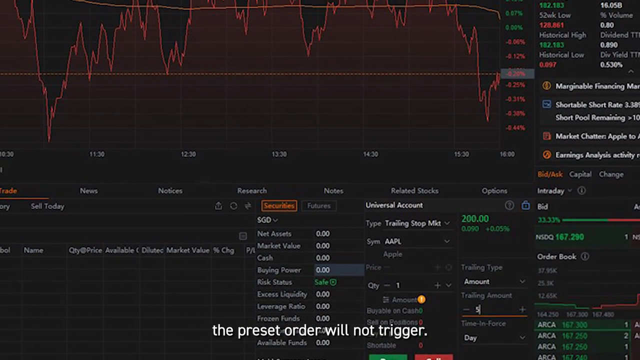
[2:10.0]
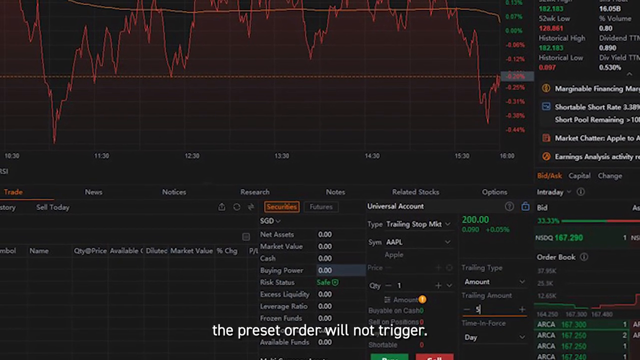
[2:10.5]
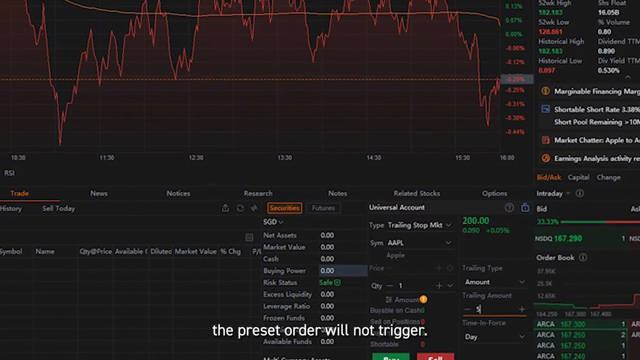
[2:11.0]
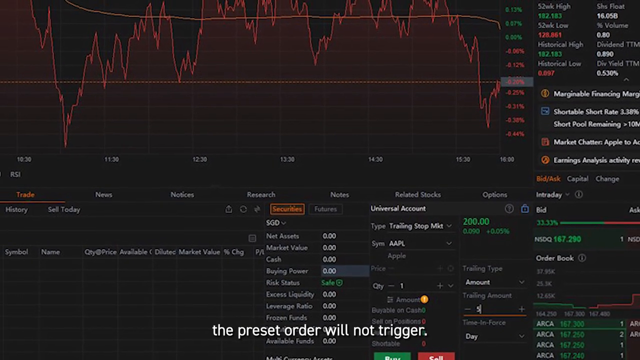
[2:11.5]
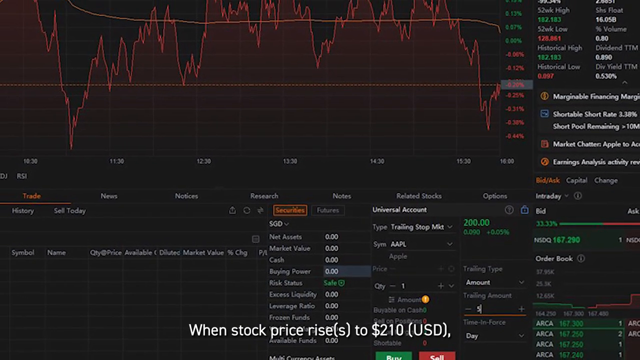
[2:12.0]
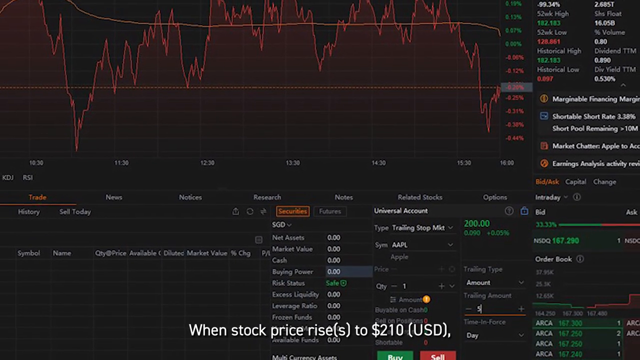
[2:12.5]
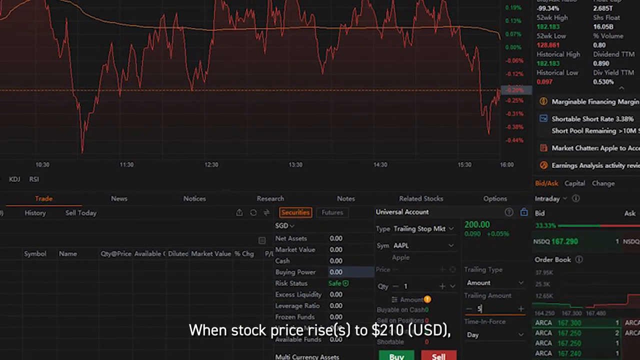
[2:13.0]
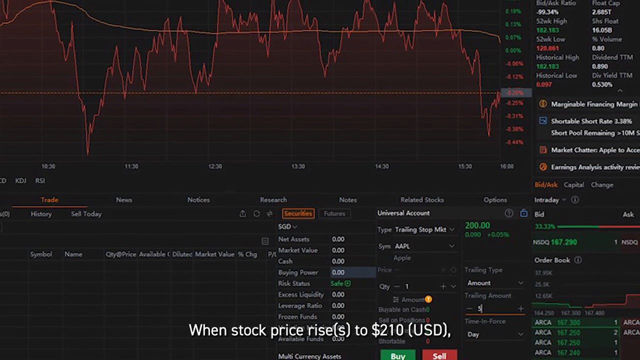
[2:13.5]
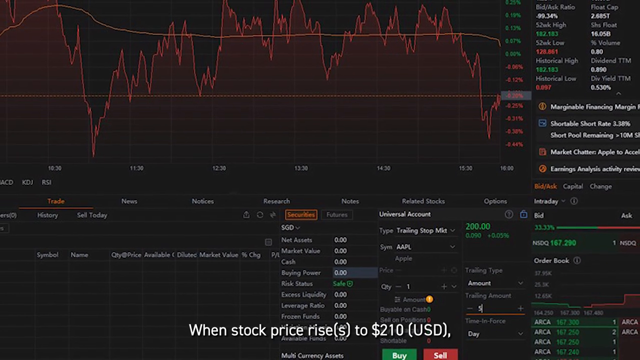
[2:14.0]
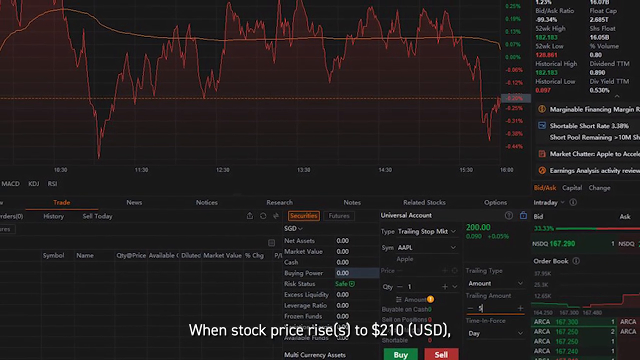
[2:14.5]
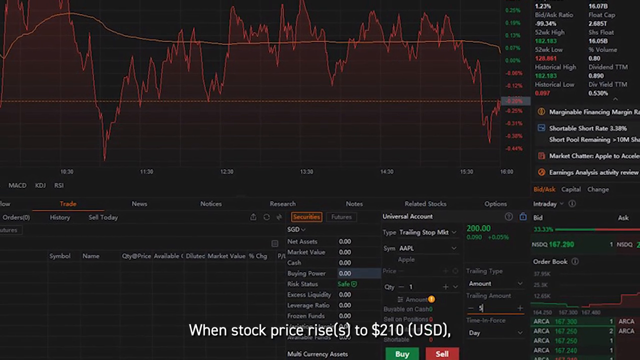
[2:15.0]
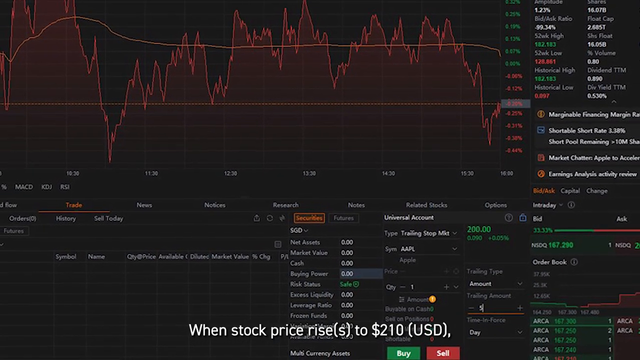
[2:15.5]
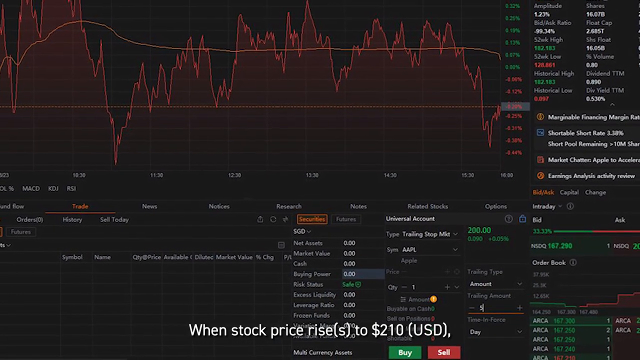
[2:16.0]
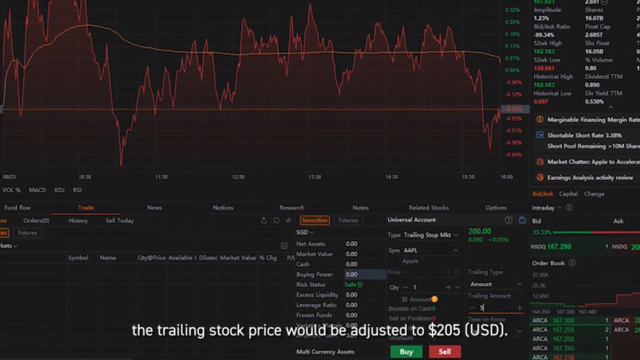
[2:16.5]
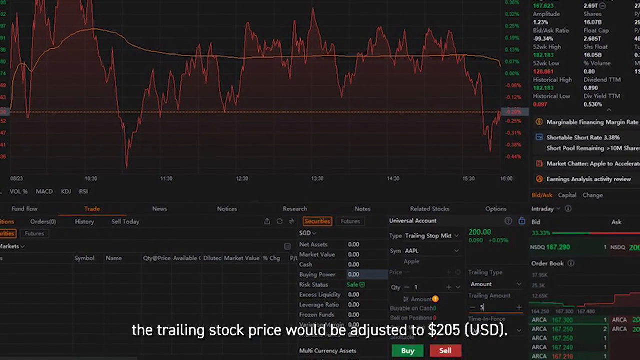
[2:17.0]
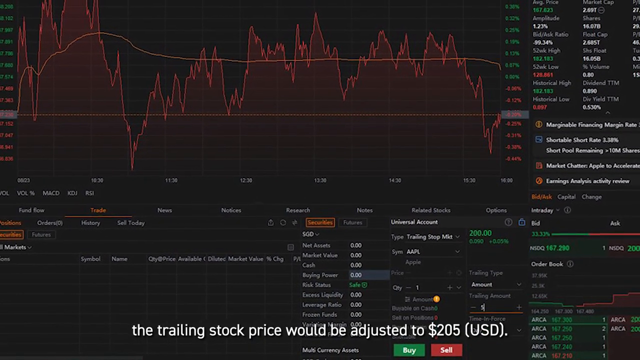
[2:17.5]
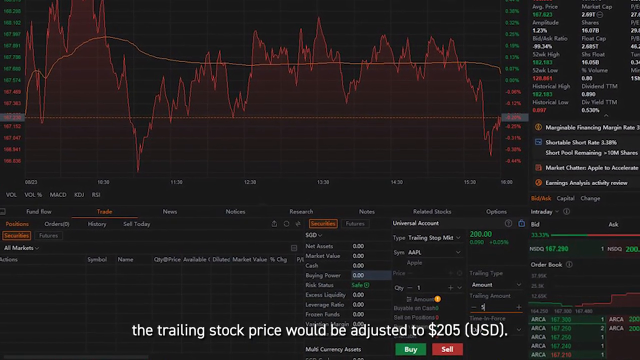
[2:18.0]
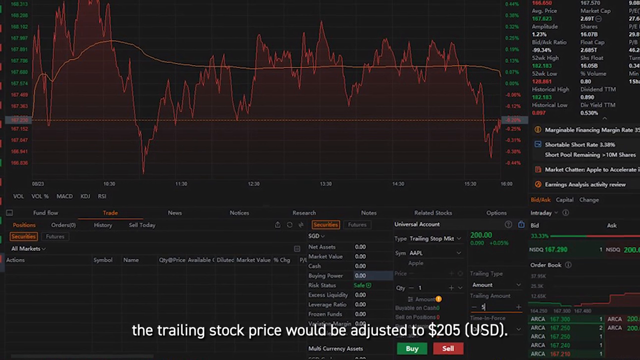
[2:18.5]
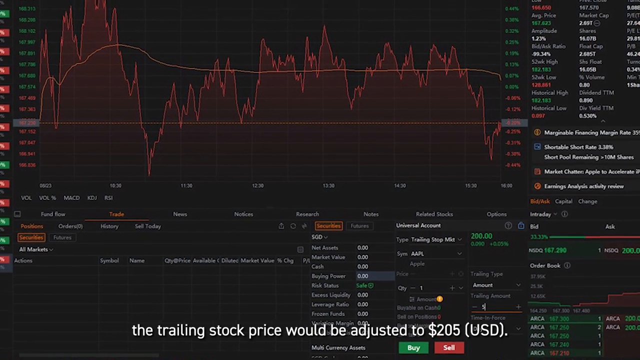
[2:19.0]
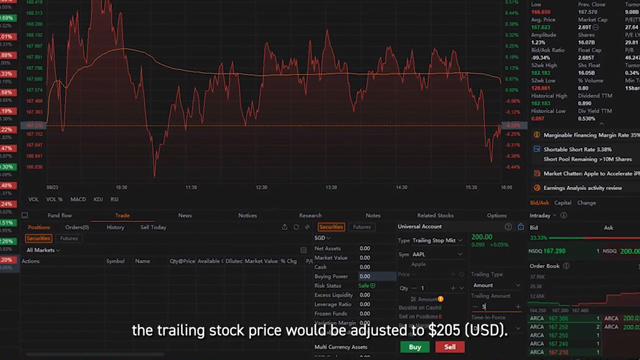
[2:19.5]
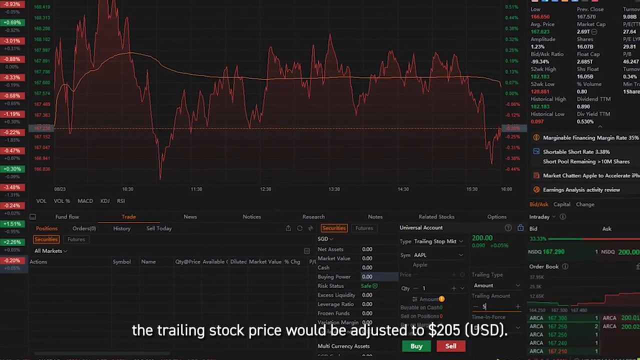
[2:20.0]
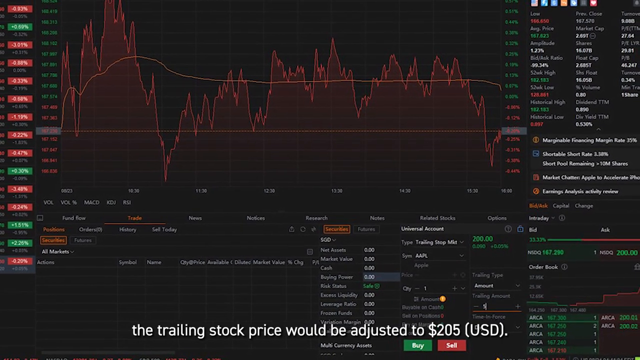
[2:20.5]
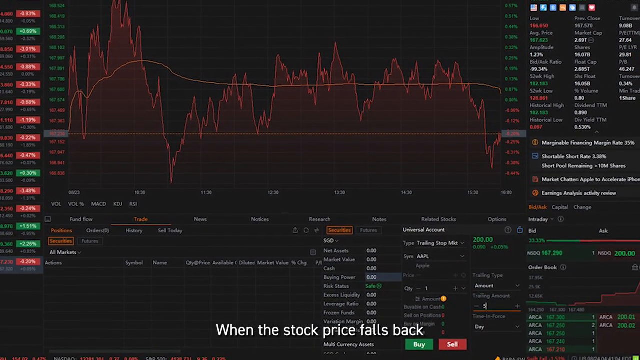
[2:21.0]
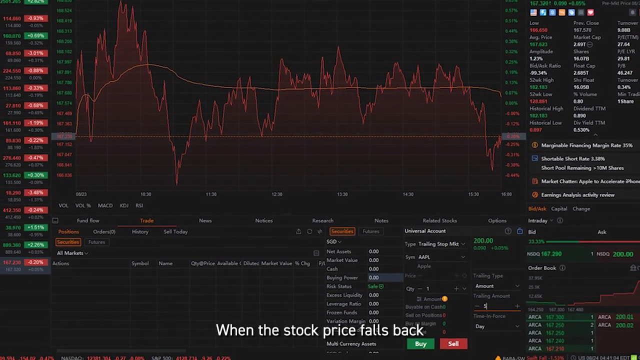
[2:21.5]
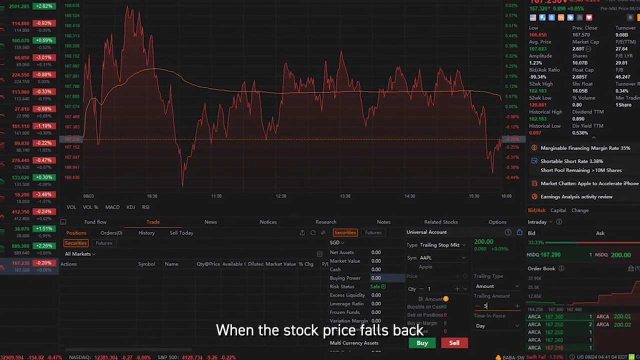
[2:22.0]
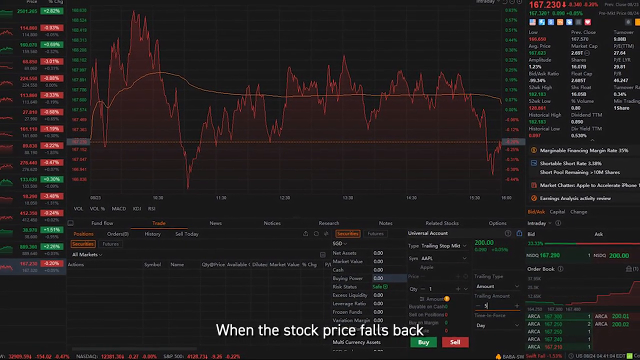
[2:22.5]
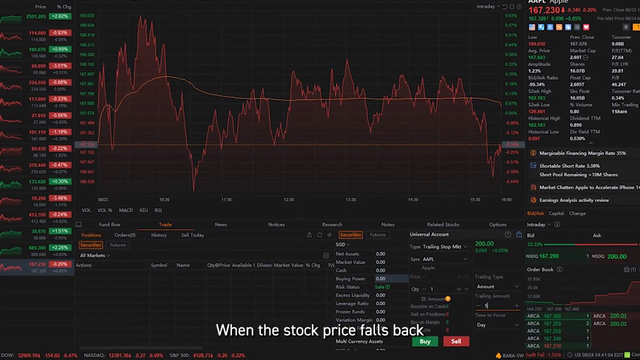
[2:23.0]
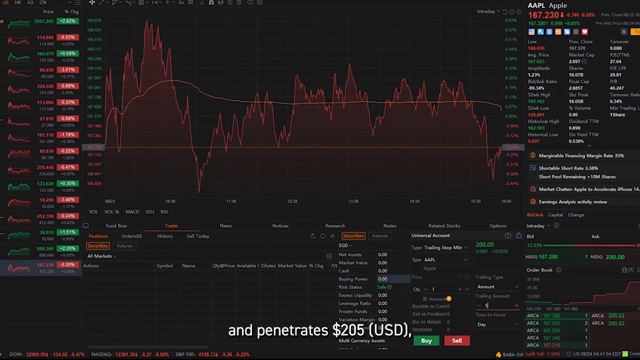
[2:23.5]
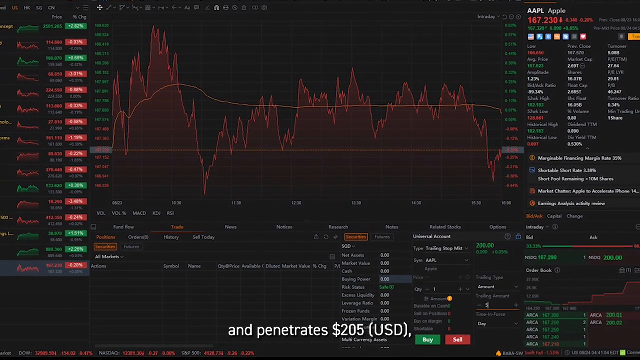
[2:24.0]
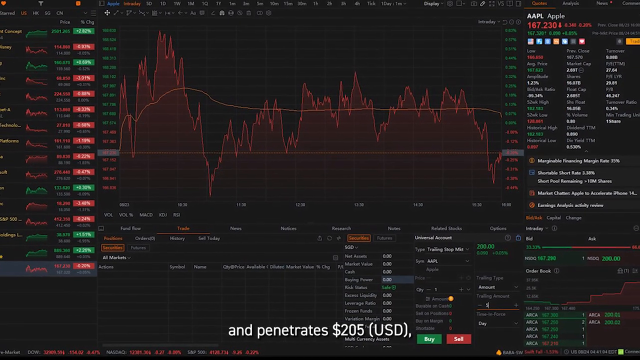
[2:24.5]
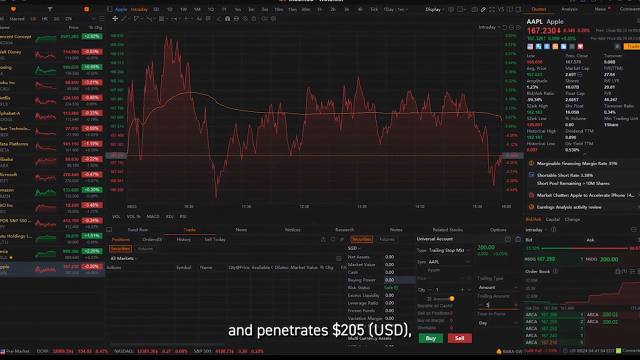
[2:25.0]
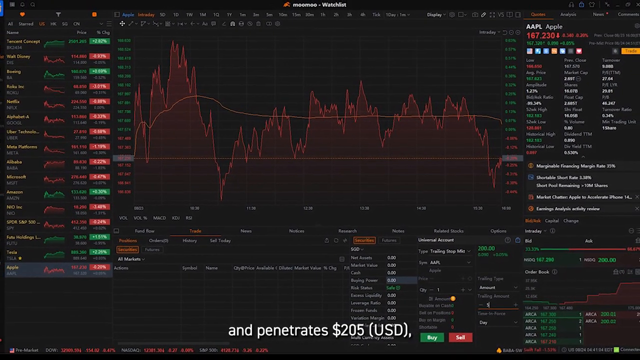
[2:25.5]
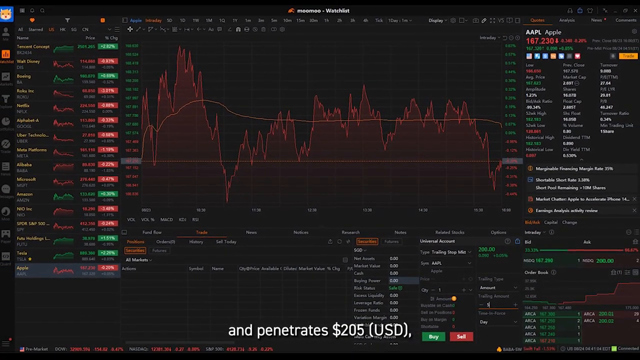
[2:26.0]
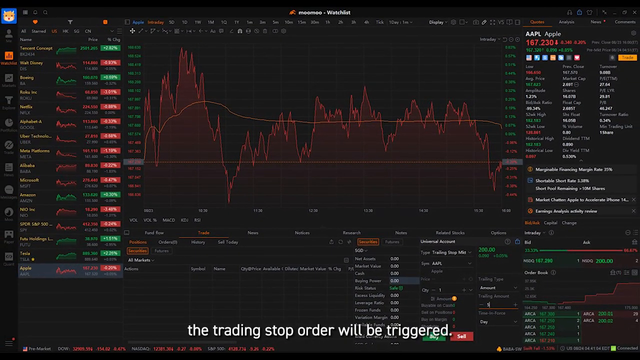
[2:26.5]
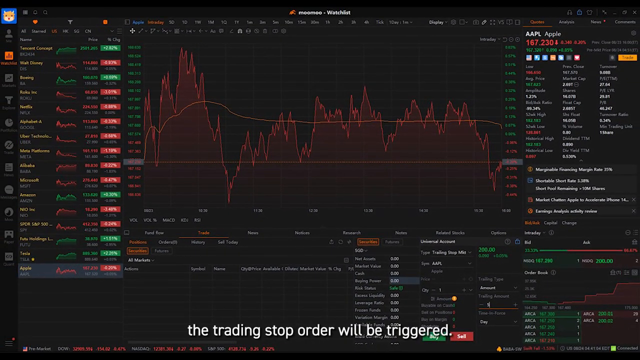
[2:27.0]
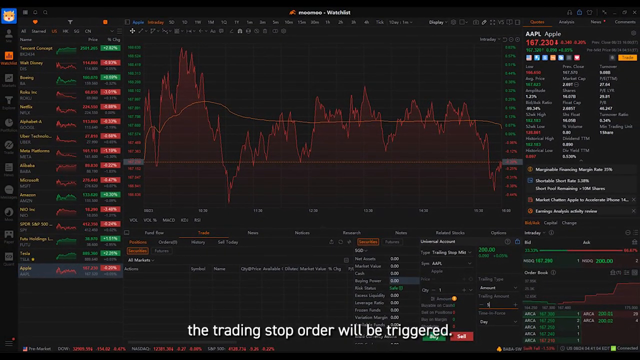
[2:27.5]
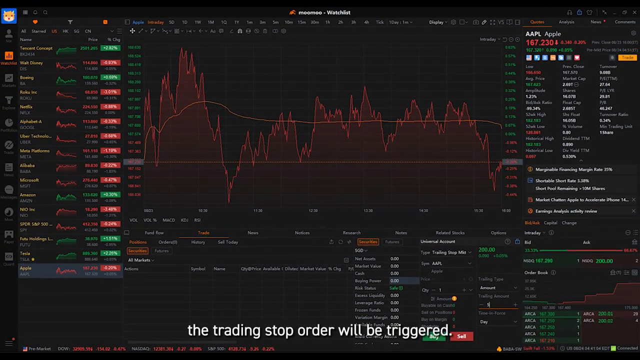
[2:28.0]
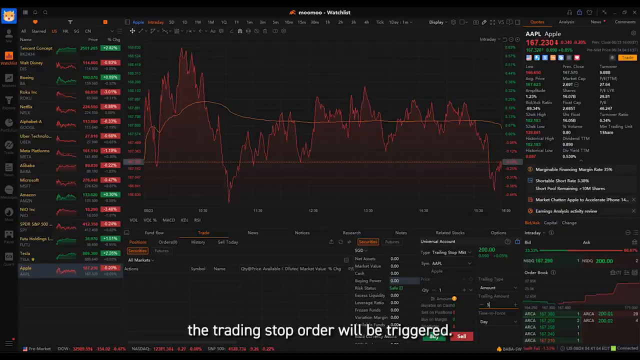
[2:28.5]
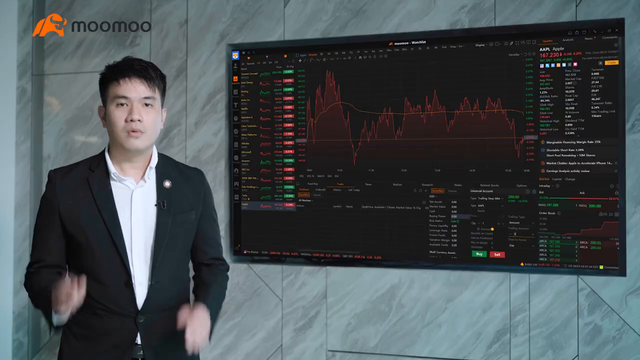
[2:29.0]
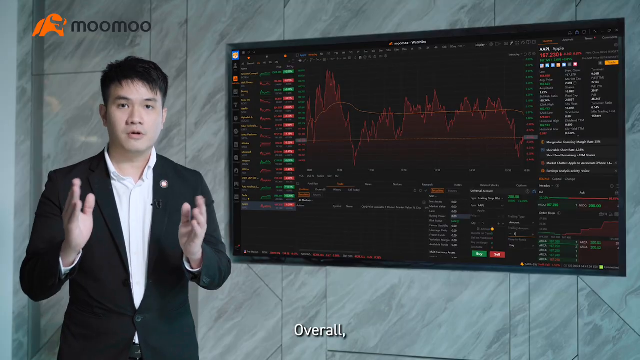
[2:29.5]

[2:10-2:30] Lee continues with the $200 example. The view zooms in on the trade stop market, then returns to Lee as he explains what is on the screen. The screen shows many images, a lot of words and charts, with words in white, green and red and various symbols all over it.